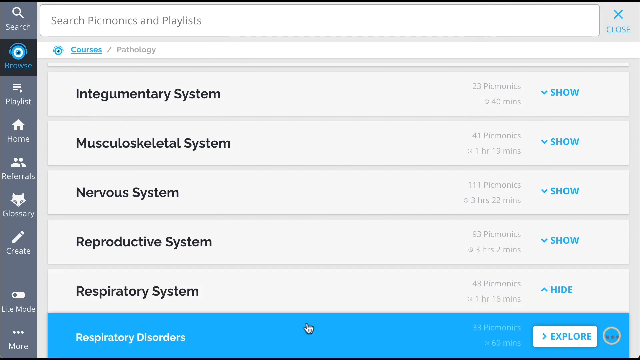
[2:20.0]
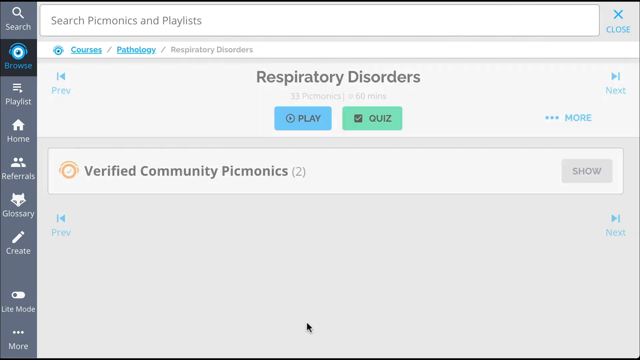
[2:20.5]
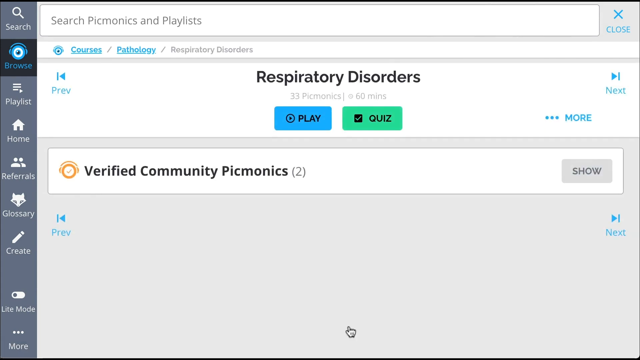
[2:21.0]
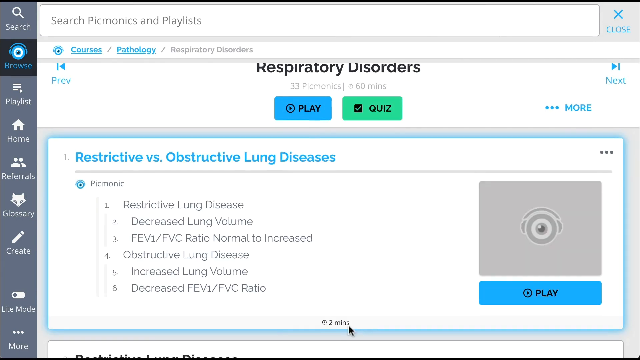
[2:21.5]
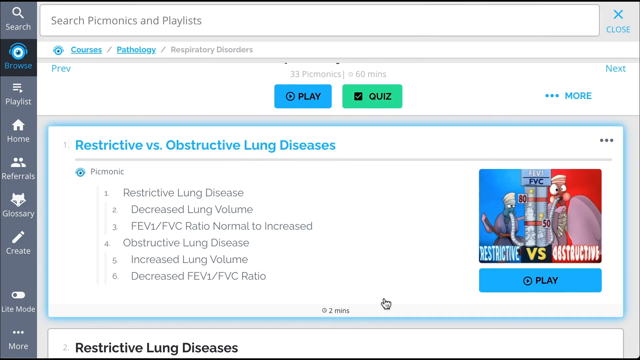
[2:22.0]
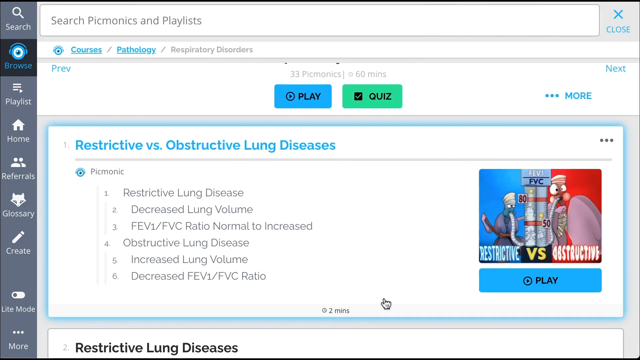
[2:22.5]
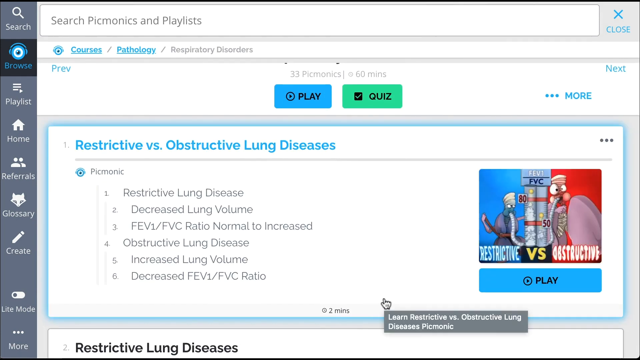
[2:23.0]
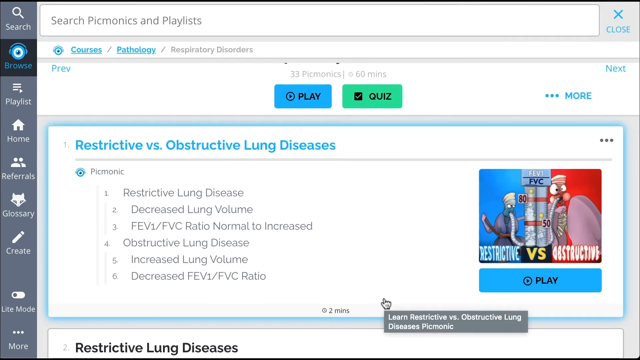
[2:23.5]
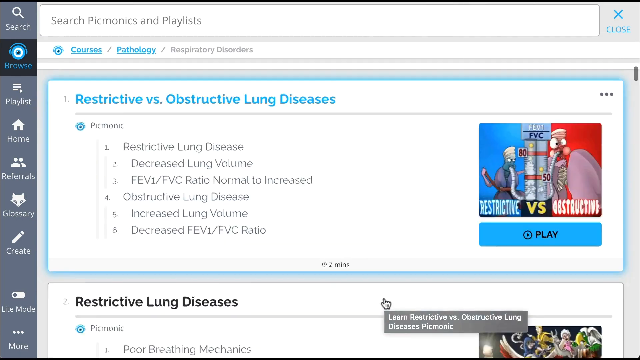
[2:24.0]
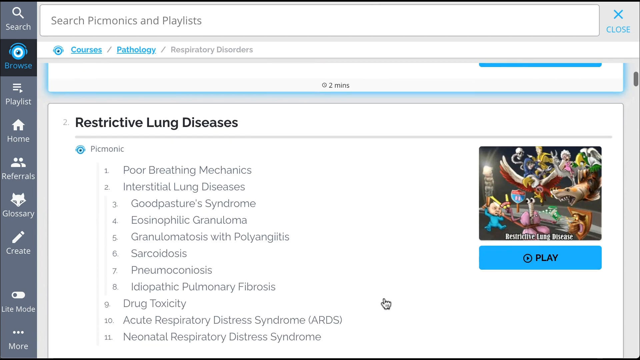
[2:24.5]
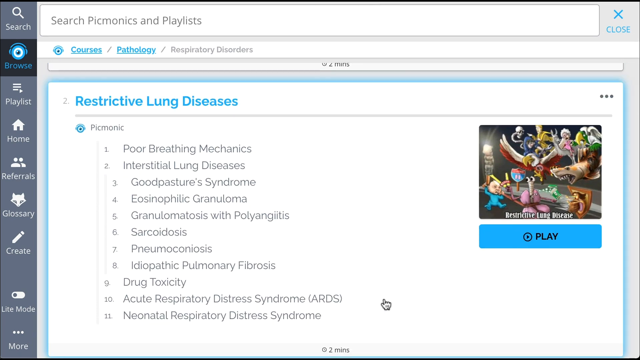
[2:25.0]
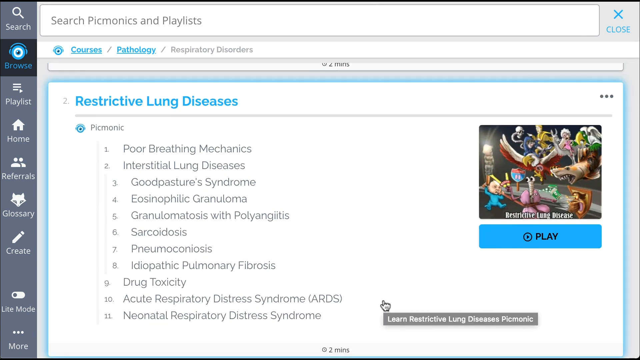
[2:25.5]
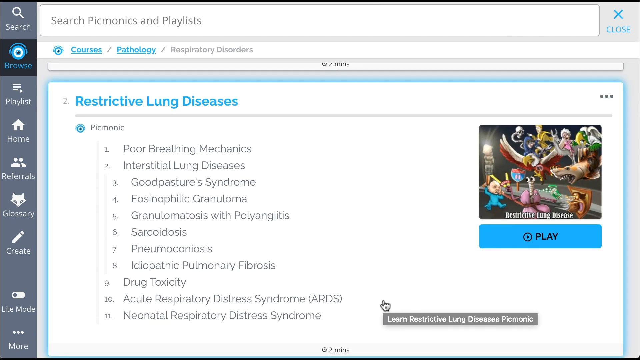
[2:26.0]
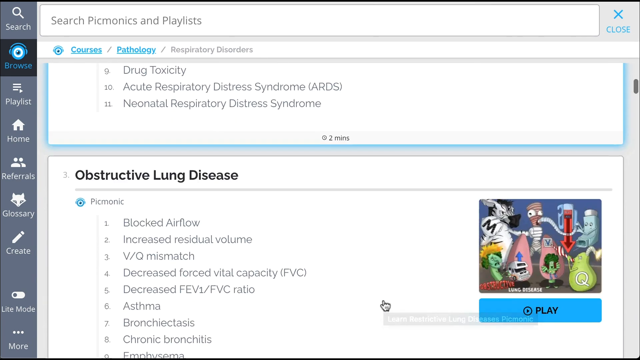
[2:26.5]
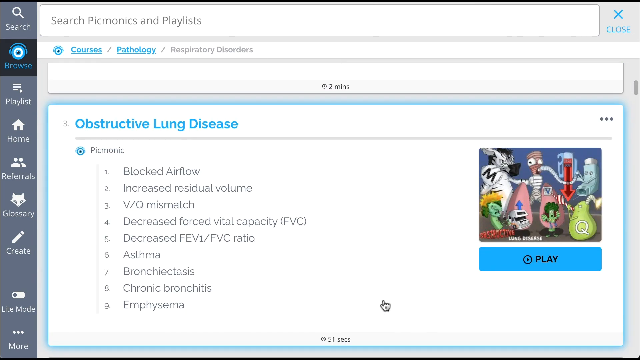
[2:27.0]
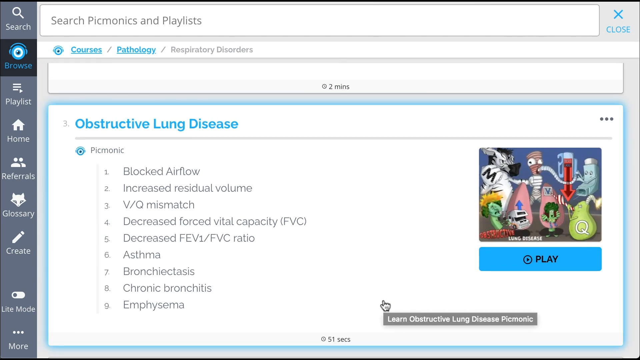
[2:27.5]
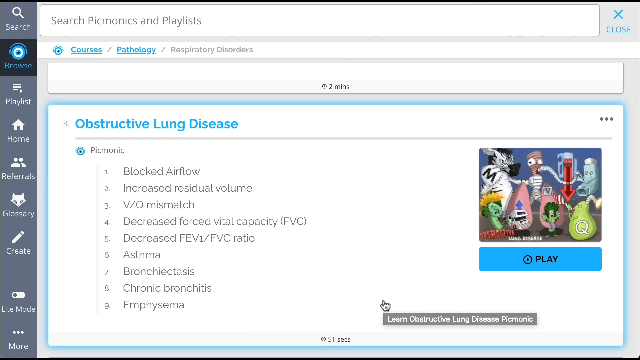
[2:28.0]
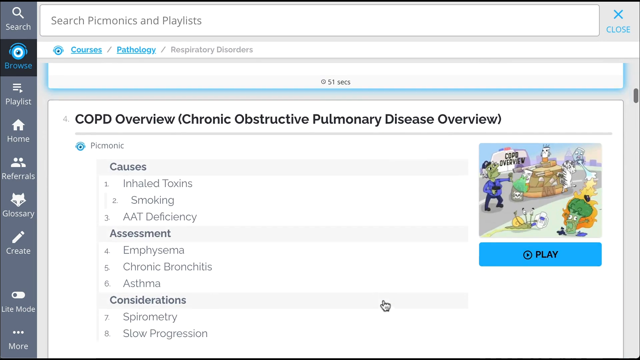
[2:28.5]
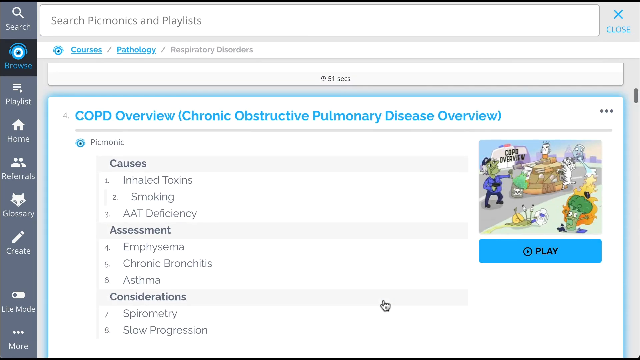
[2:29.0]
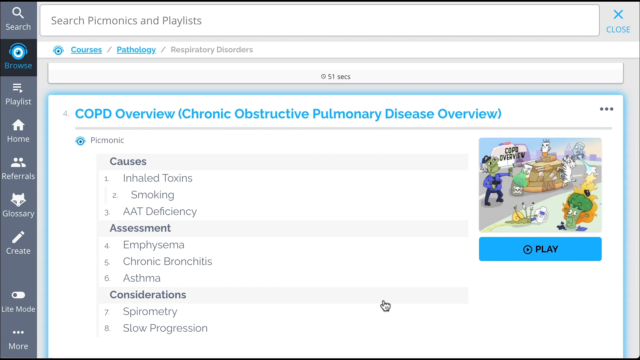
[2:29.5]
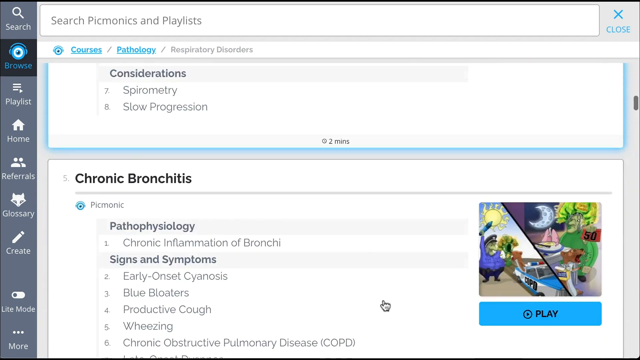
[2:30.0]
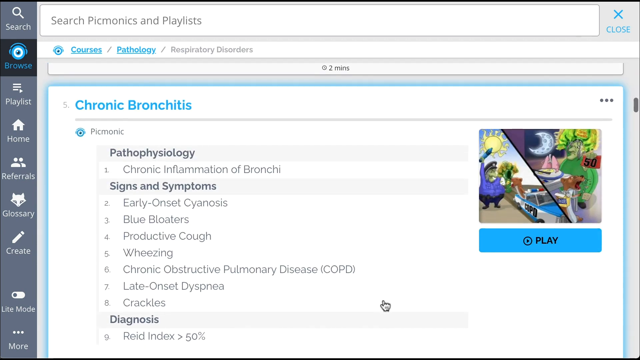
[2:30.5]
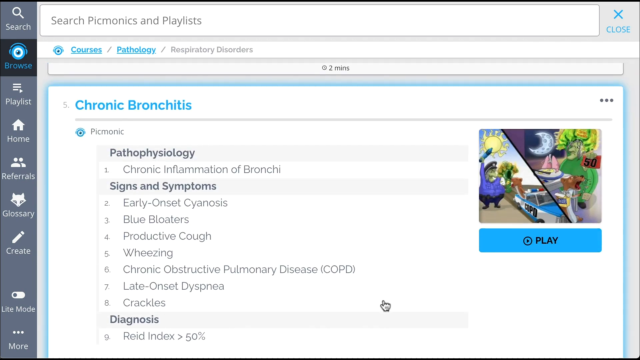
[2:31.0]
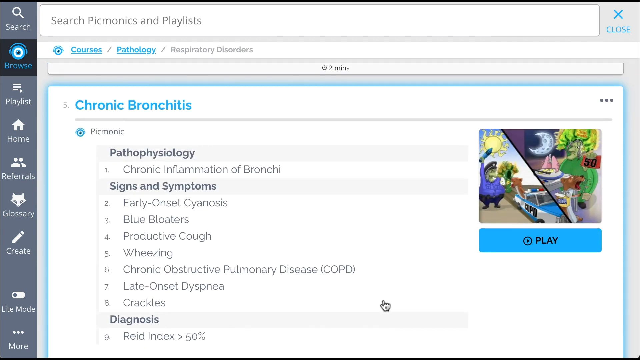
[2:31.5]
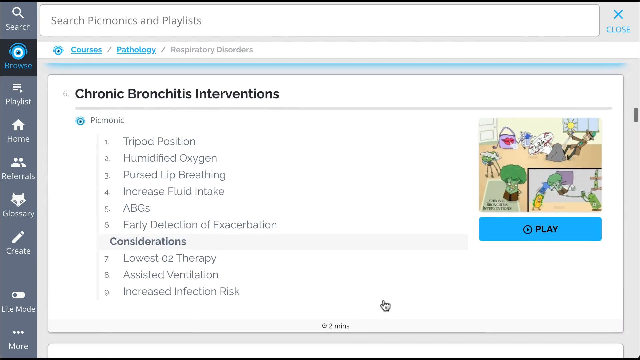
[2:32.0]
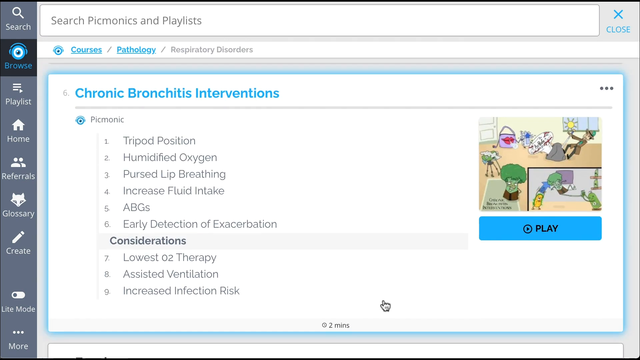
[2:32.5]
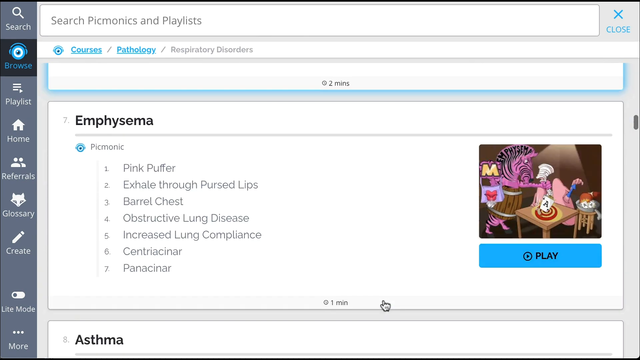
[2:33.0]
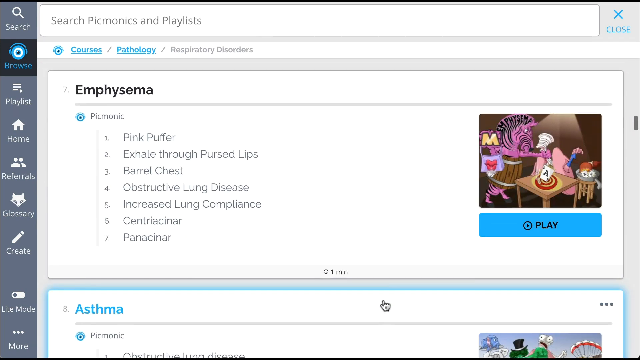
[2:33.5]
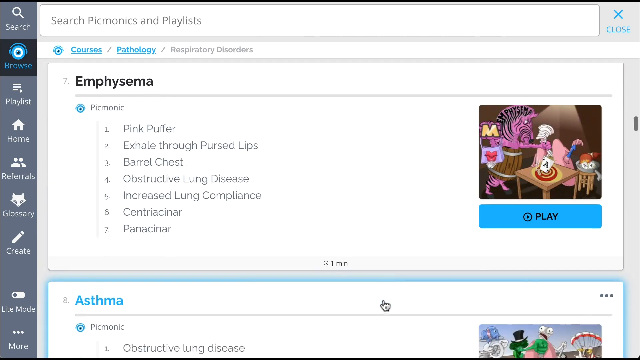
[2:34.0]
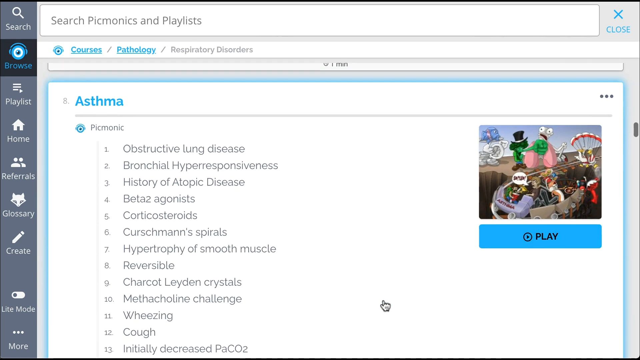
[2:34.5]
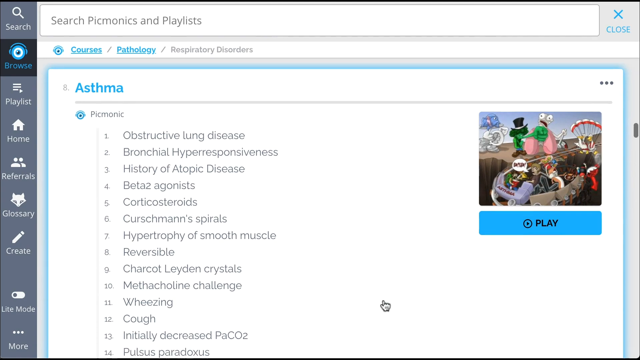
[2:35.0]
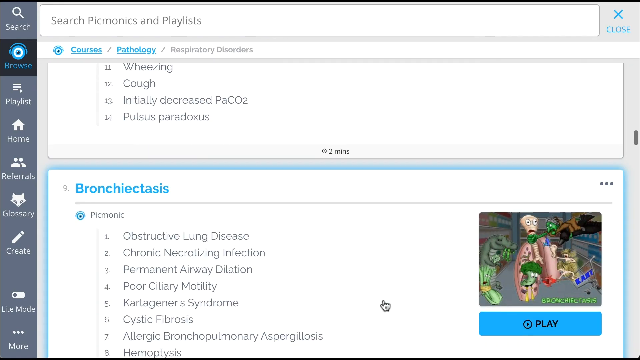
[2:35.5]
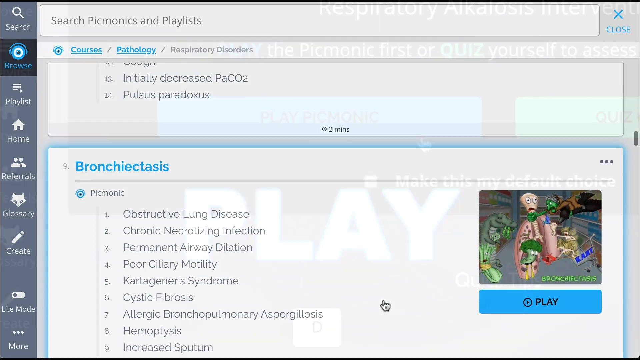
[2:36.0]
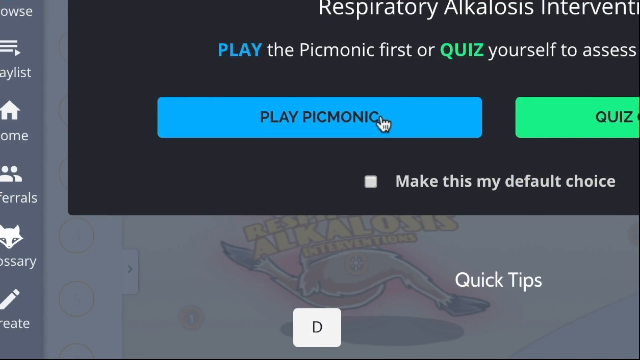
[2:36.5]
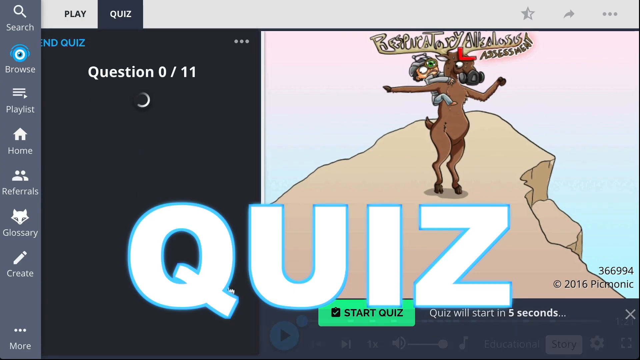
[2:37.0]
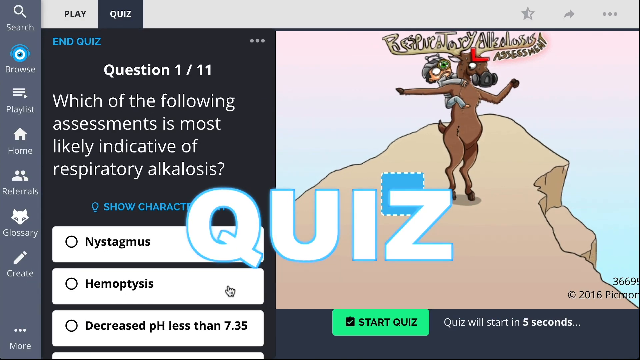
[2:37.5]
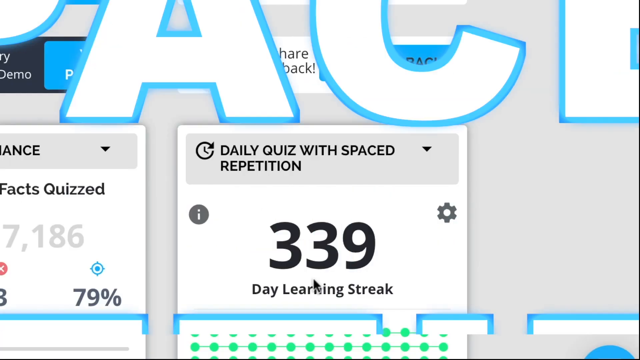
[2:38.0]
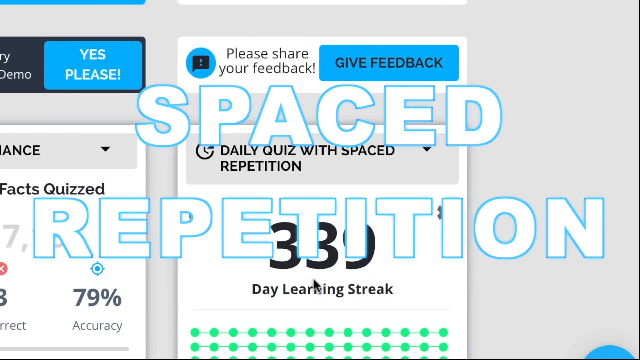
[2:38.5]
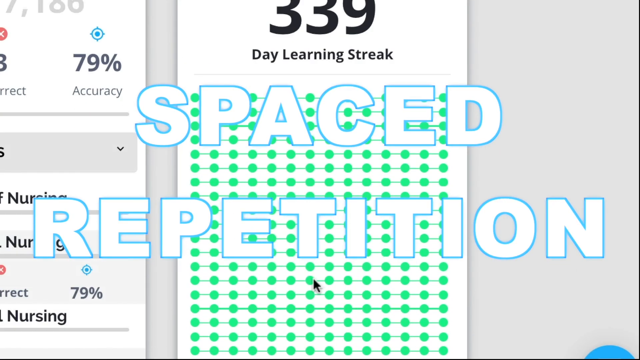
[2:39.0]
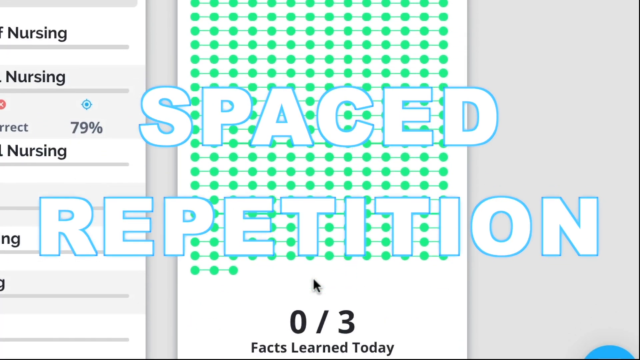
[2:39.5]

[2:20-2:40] In a screen share, a navigation bar on the left lists search, browse, playlist, home, referrals, glossary, and create. The area to the right, which takes up most of the screen, is gray and white, with what looks to be a search bar at the top for searching within Picmonic or playlists. Pathology is pulled up in the courses section, with various Picmonic courses listed below. The user clicks the one for respiratory disorders, and two buttons pop up, to play or to take a quiz. The user scrolls down through each of the sessions, which get a blue border as the user passes through them. Finally the user hits play on one, and a boy riding a deer suddenly appears in the video. Then the quiz pops up, offering spaced repetition, with various green dots one after another. The user scrolls down to start daily quiz.